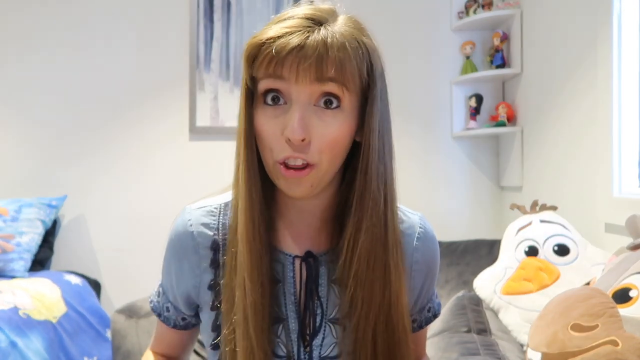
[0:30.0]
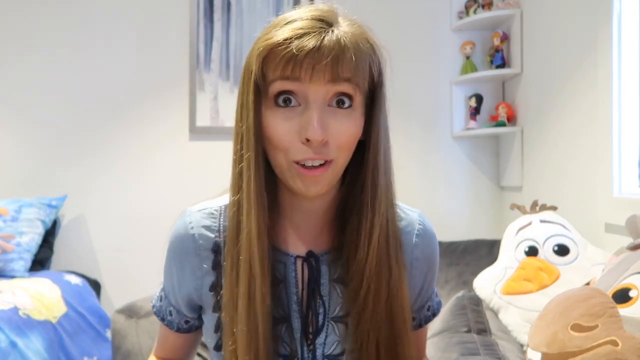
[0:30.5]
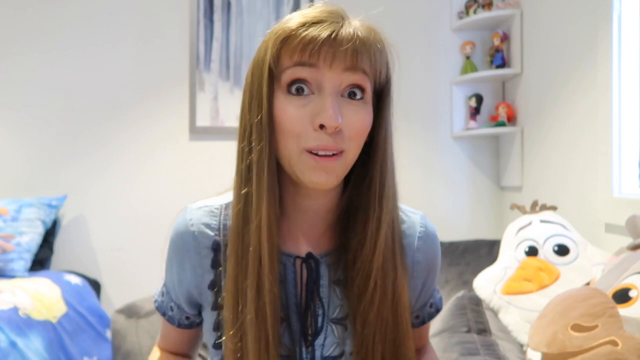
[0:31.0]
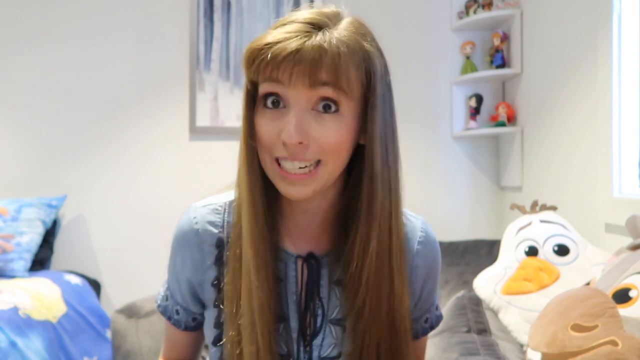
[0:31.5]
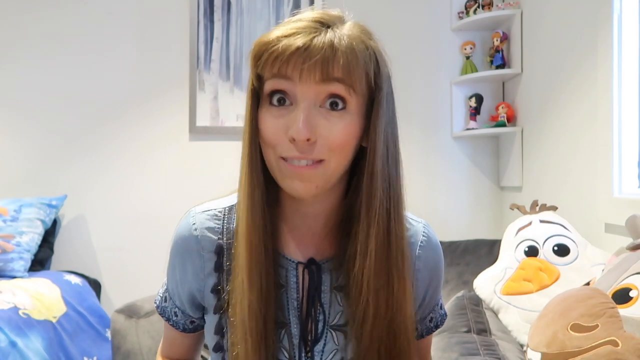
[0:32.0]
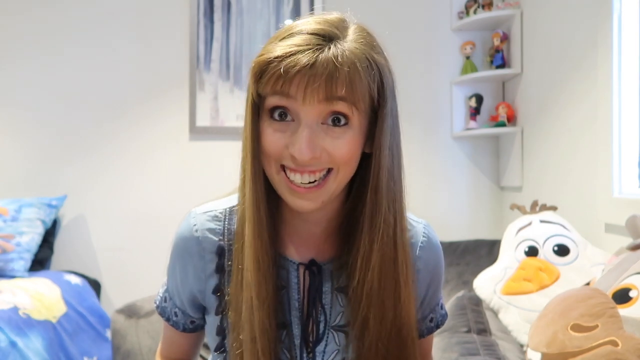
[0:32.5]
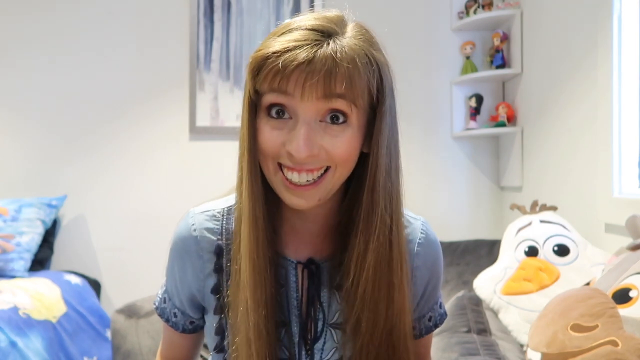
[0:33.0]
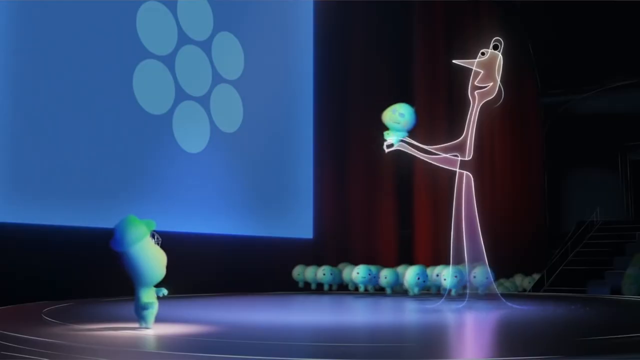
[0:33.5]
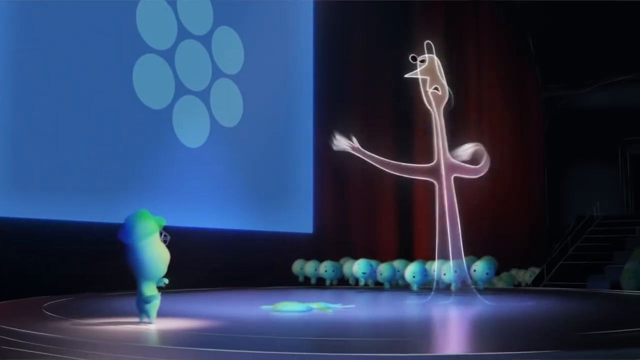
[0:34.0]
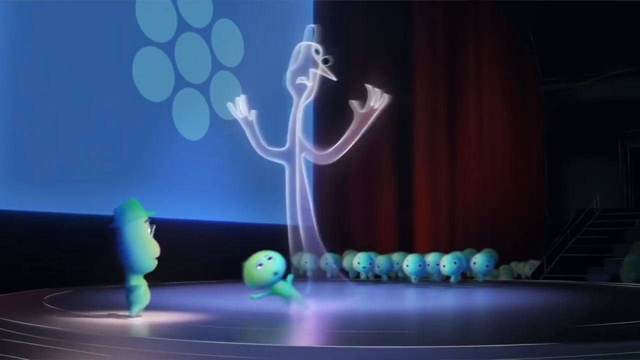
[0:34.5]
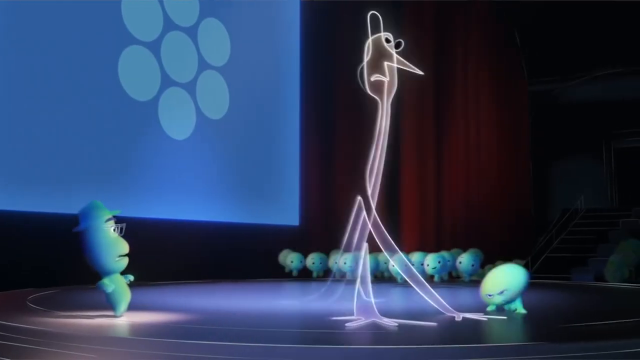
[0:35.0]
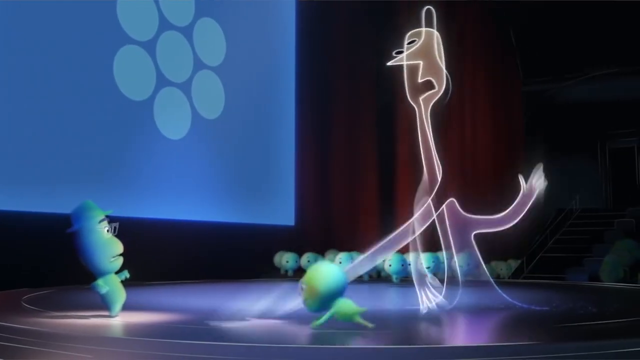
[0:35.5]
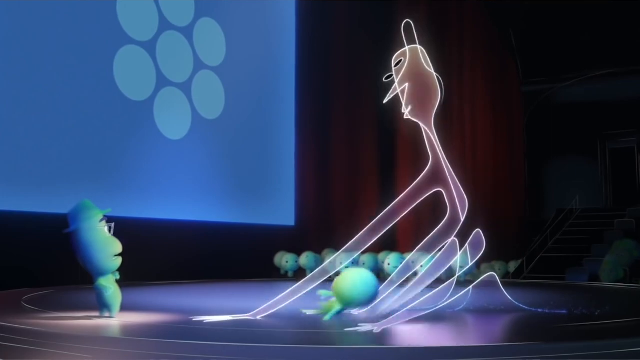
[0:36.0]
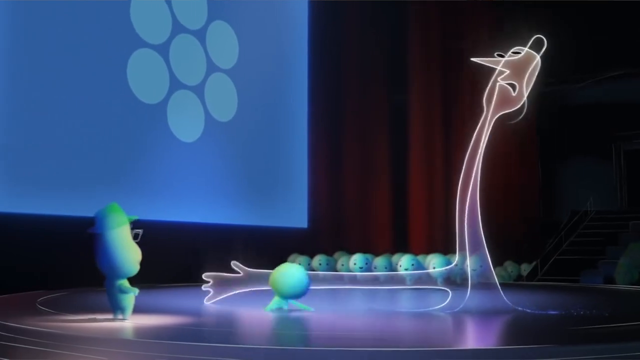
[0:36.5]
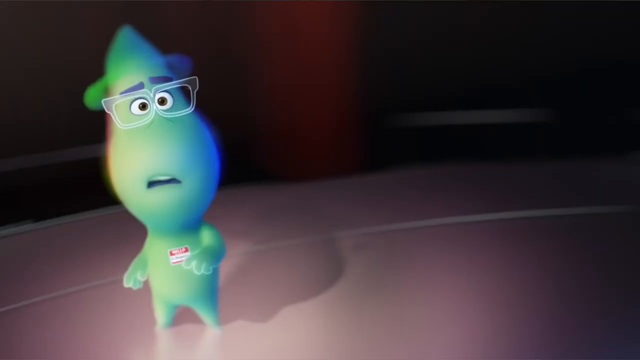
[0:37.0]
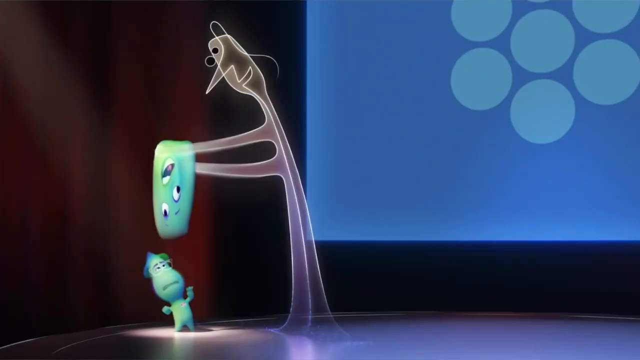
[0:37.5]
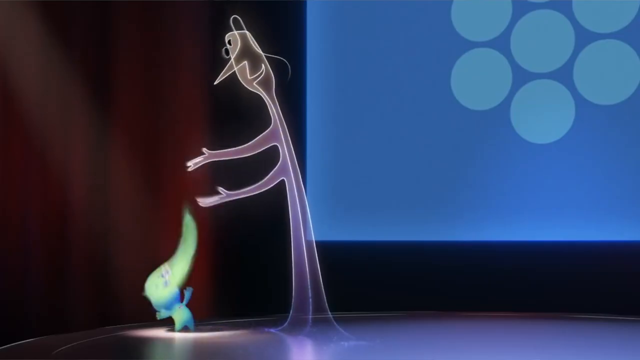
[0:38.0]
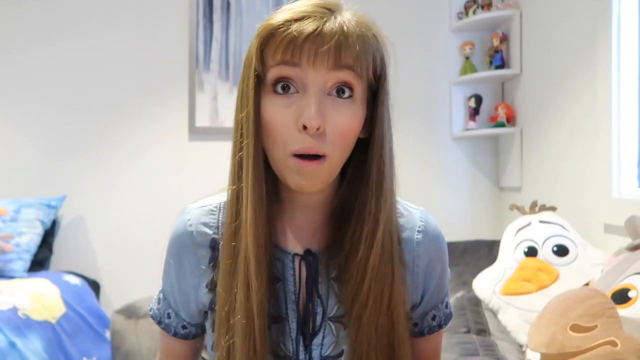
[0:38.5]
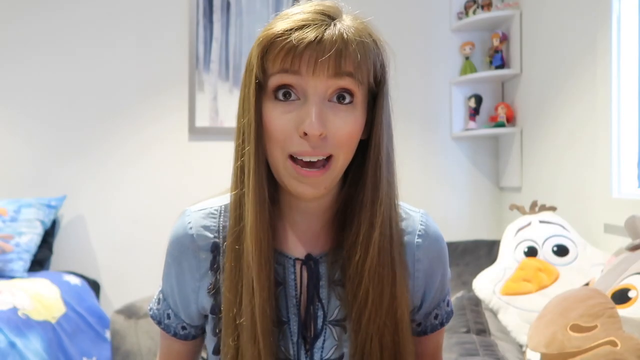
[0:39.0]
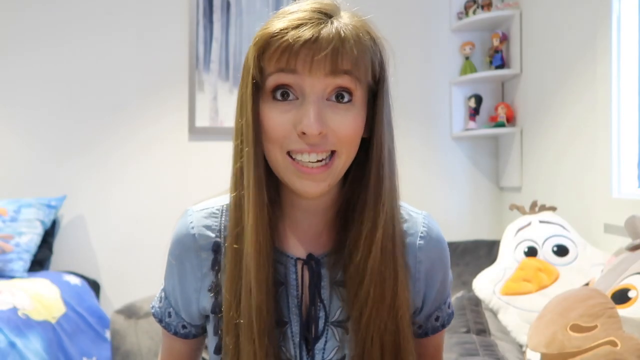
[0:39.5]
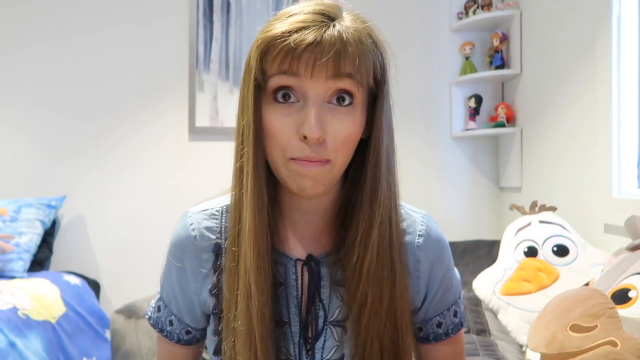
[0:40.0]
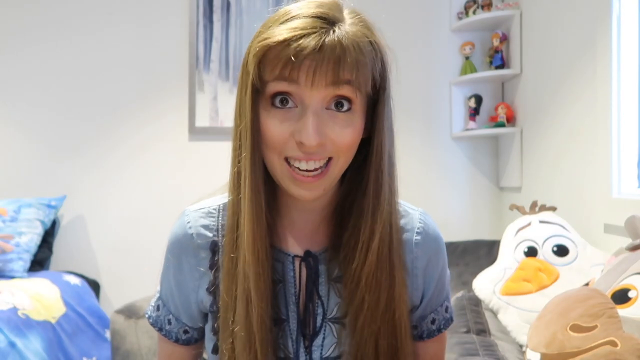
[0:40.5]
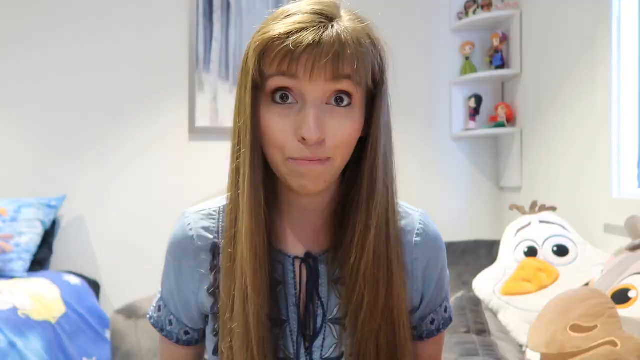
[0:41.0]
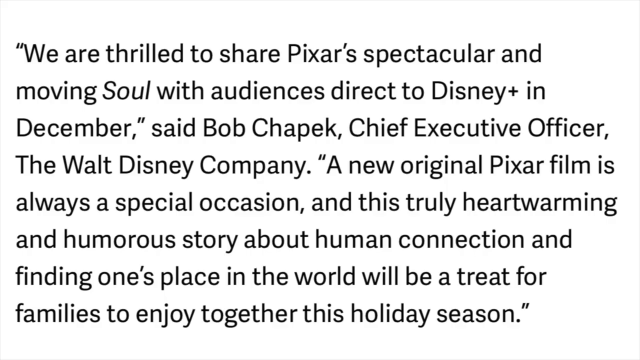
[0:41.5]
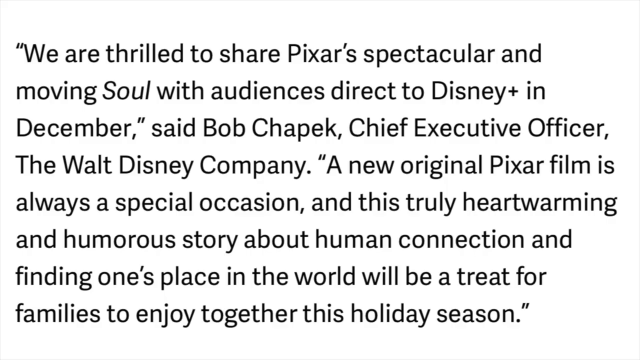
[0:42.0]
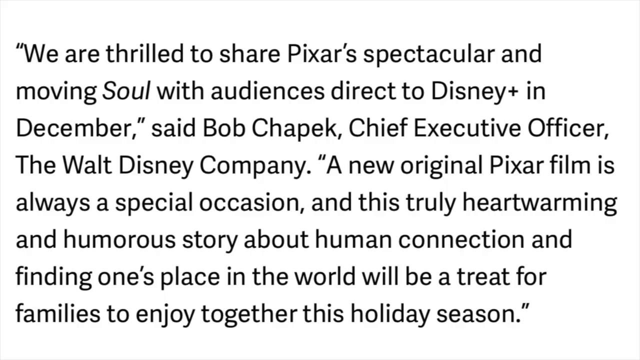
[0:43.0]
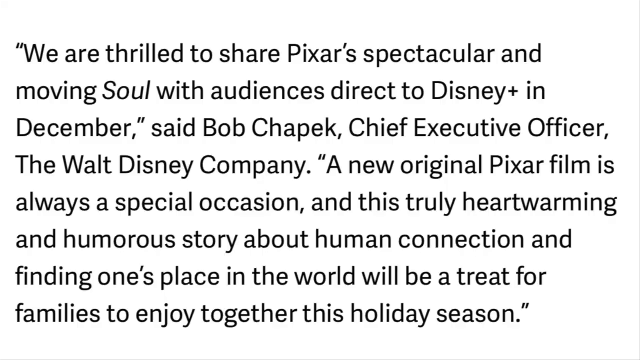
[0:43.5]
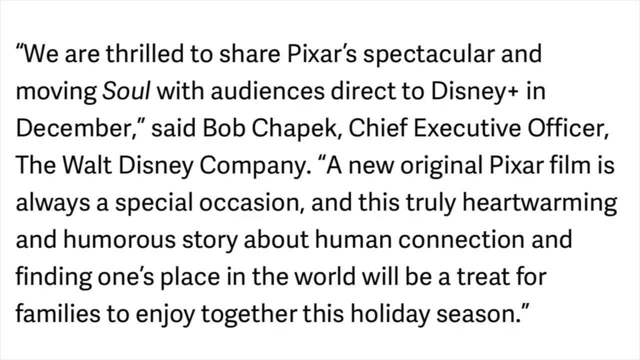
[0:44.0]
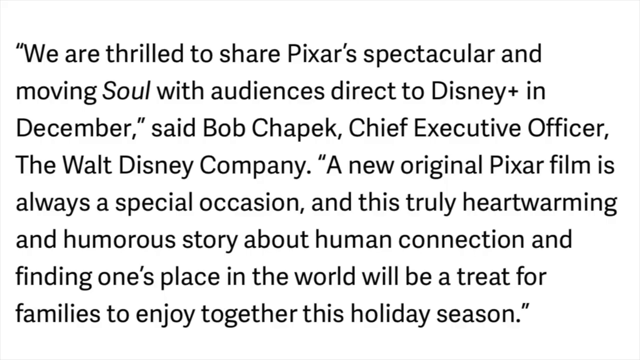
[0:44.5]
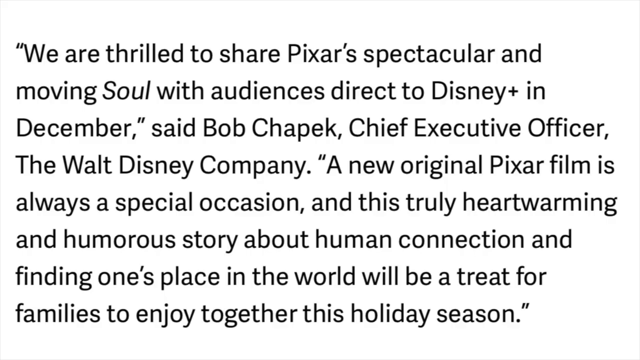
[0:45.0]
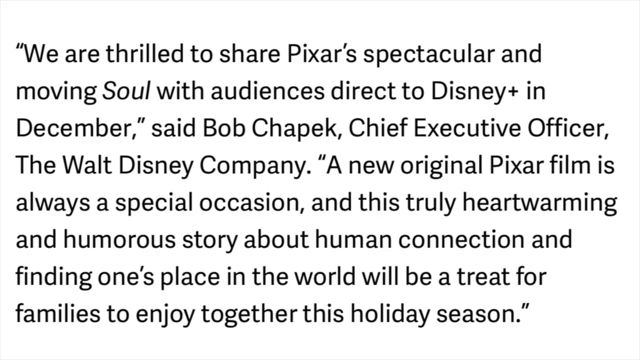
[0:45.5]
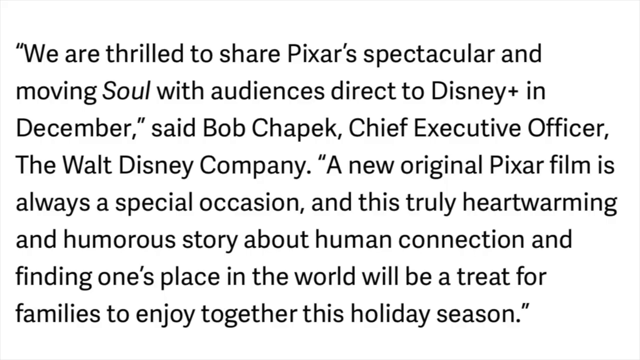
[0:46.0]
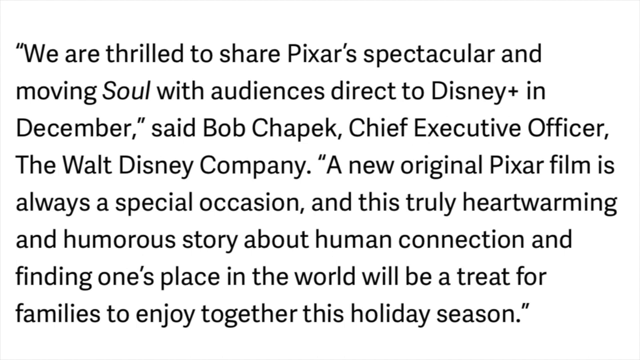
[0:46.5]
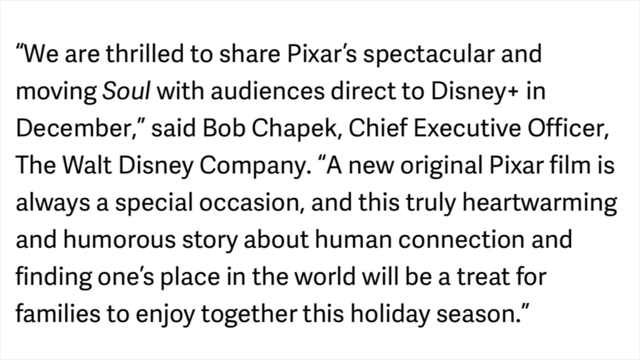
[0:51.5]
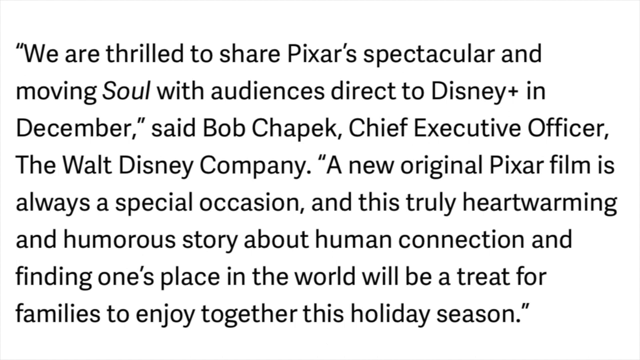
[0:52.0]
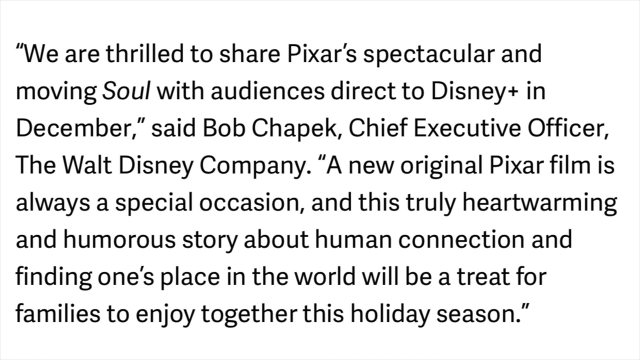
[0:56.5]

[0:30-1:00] The woman with long, straight blonde hair speaks very enthusiastically, opening her eyes very wide. She wears a blue top, and a white shelf with figurines is on the right side of the screen. The woman is white and has a very big smile that shows her teeth. A scene from the animation follows: a small green animated character is on the left side of the screen, there appears to be a big screen above them, and someone in front of him is showing him something. A smaller baby runs towards the other figure while the animated figure tries to catch him, and the other animated character looks very scared and concerned. Text on the screen then reads: "we are thrilled to share Pixar's spectacular and moving Soul with audiences" ... said Bob Chepak, chief executive officer, the Walt Disney Company. "A new original Pixar film is always a special occasion, and this truly heartwarming and humorous story about human connection and finding one's place in the world will be a treat for families to enjoy together this holiday season."